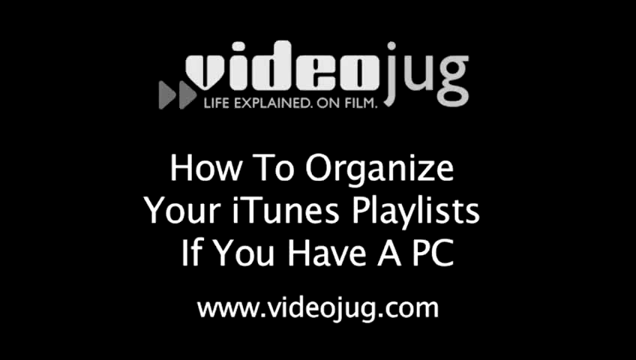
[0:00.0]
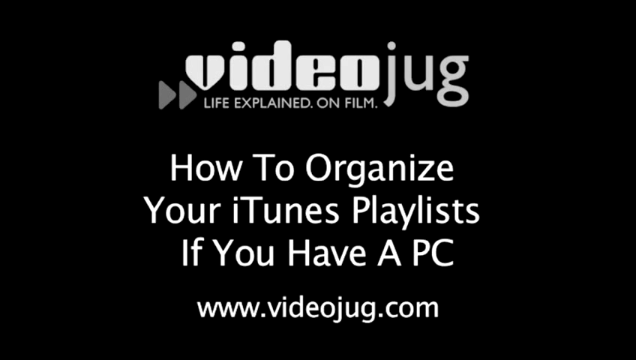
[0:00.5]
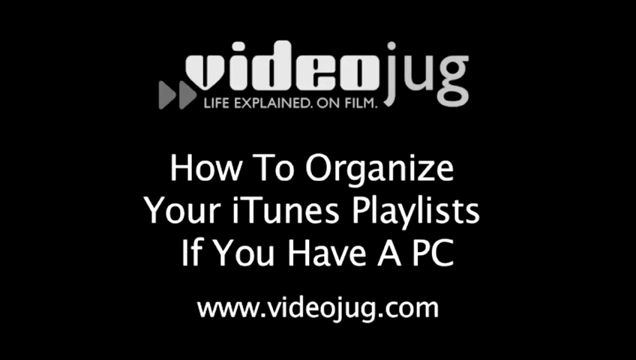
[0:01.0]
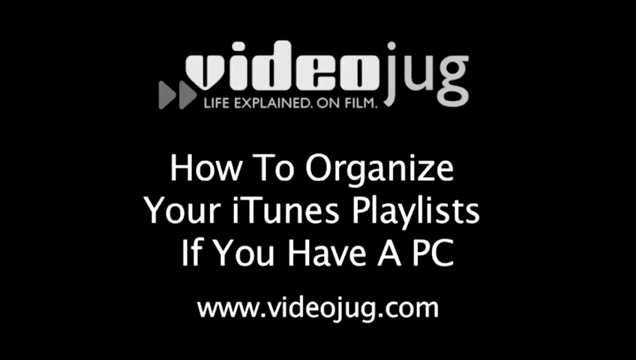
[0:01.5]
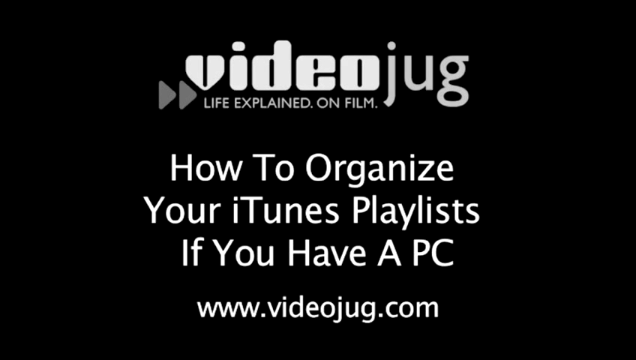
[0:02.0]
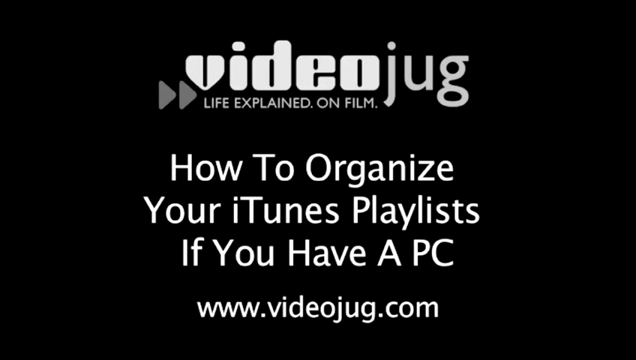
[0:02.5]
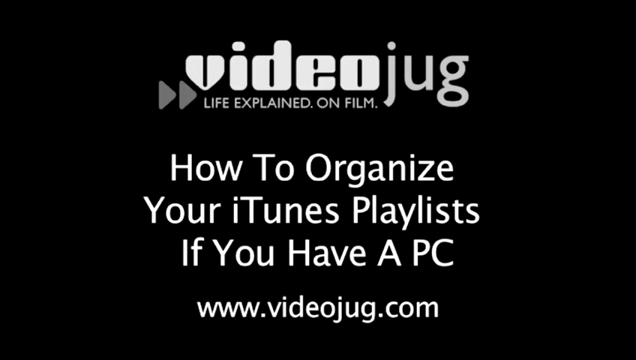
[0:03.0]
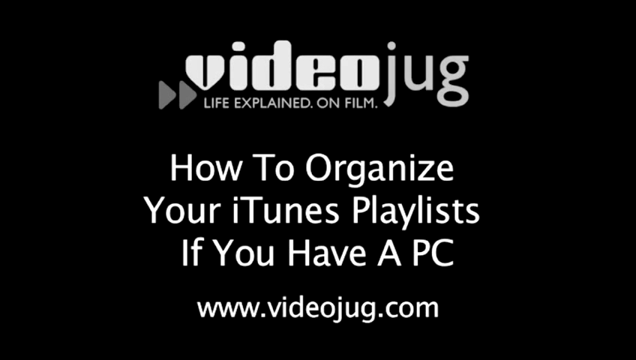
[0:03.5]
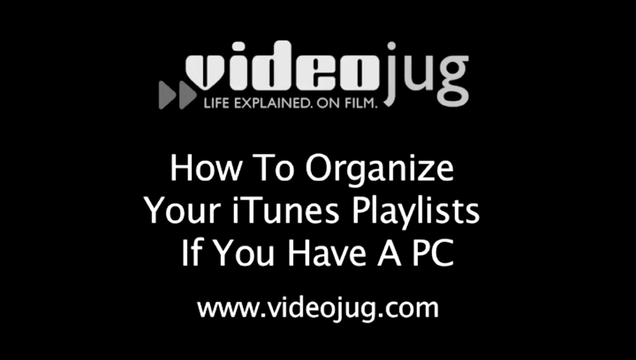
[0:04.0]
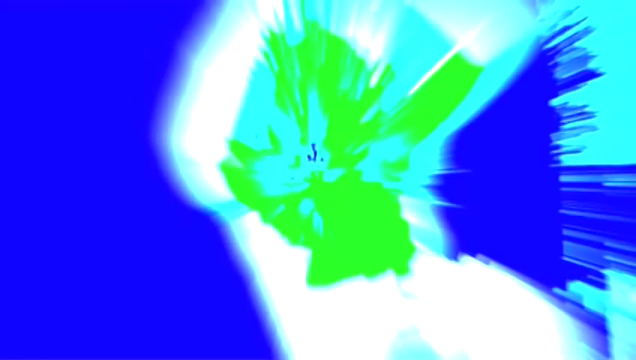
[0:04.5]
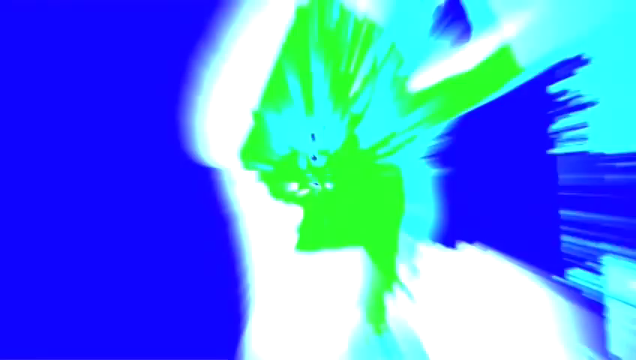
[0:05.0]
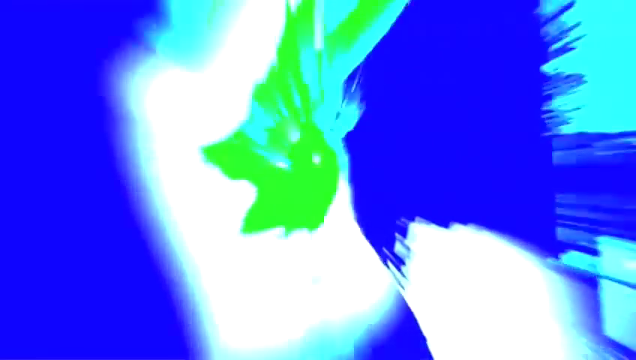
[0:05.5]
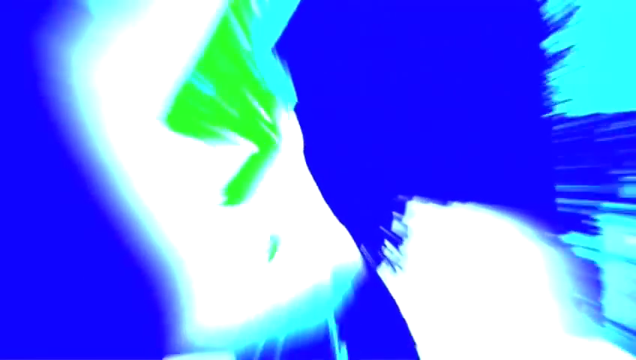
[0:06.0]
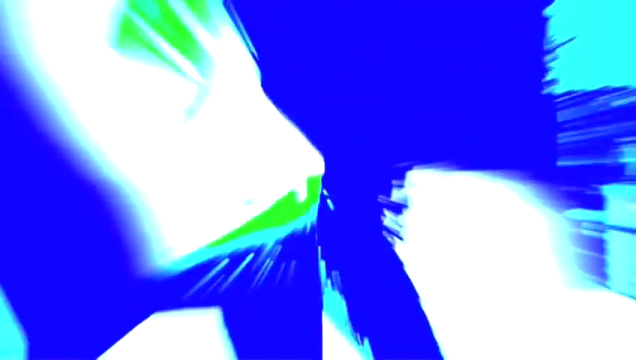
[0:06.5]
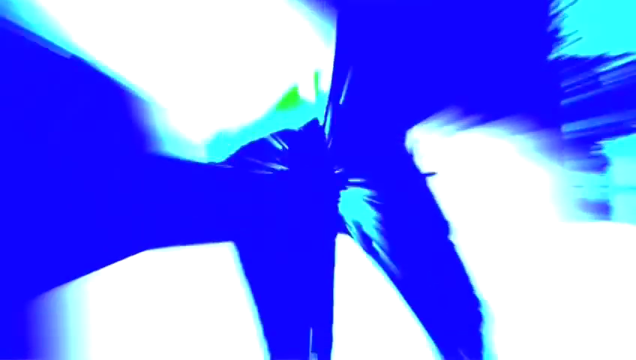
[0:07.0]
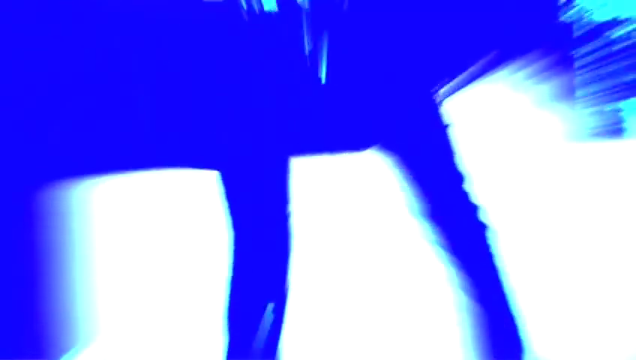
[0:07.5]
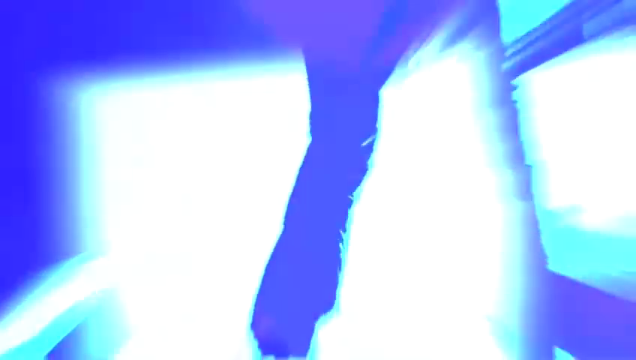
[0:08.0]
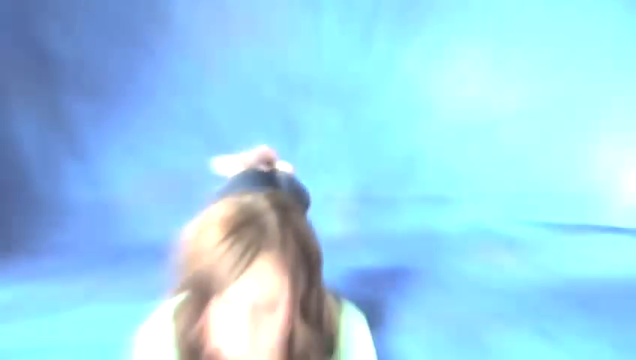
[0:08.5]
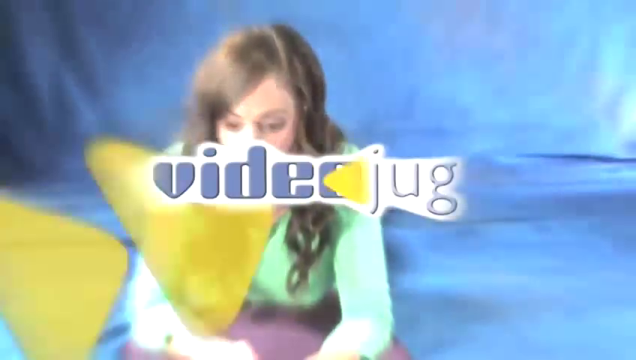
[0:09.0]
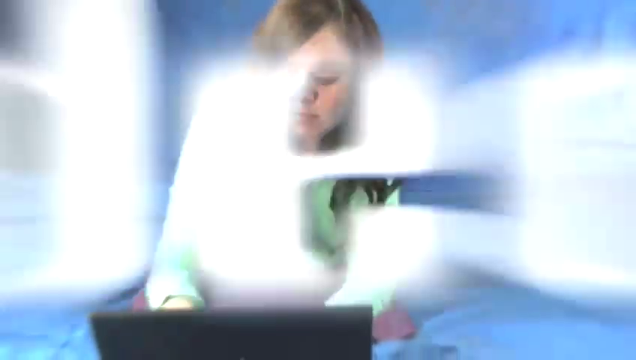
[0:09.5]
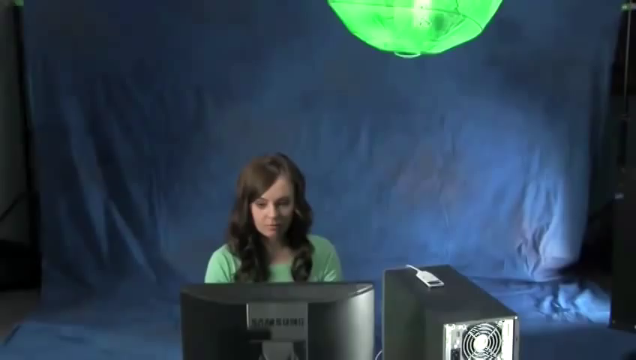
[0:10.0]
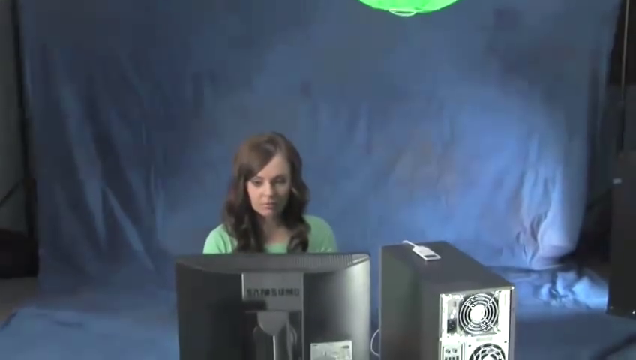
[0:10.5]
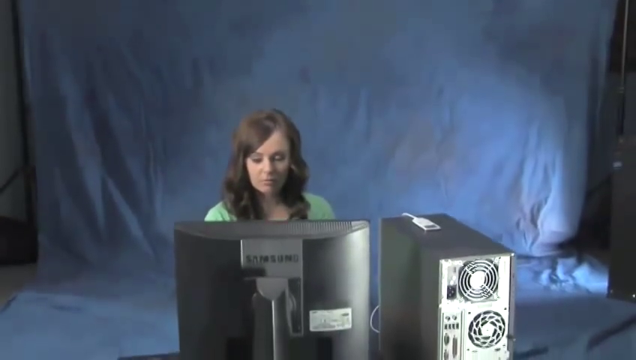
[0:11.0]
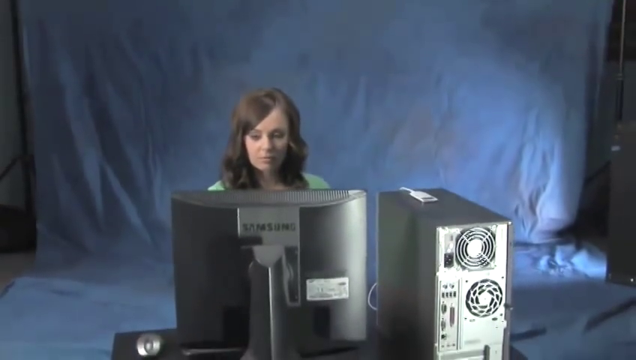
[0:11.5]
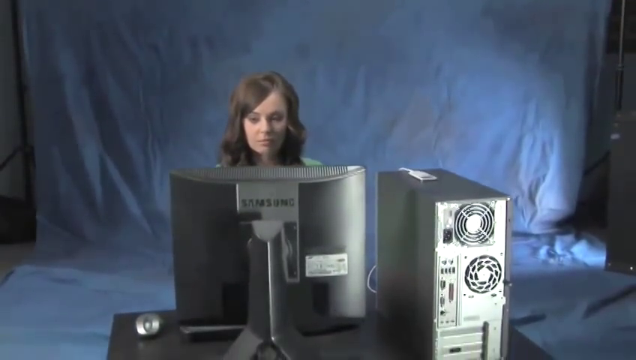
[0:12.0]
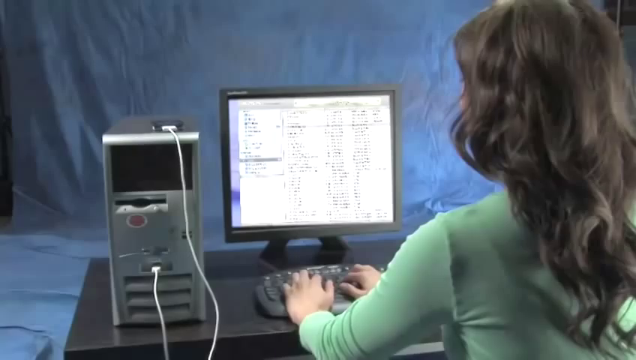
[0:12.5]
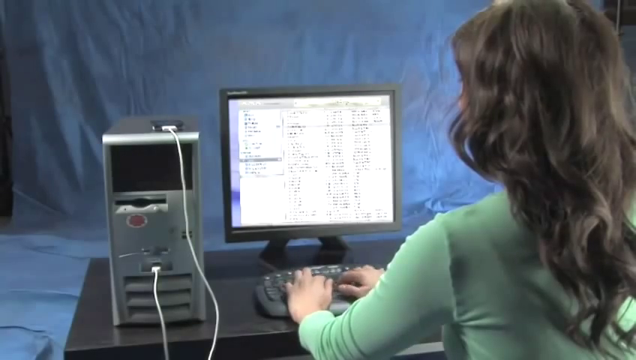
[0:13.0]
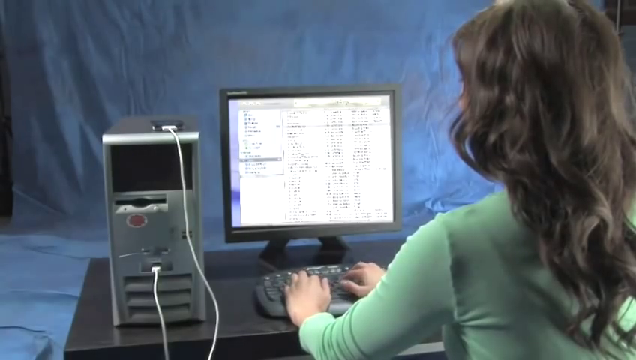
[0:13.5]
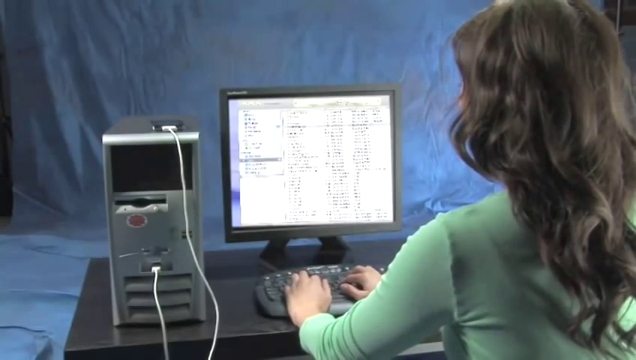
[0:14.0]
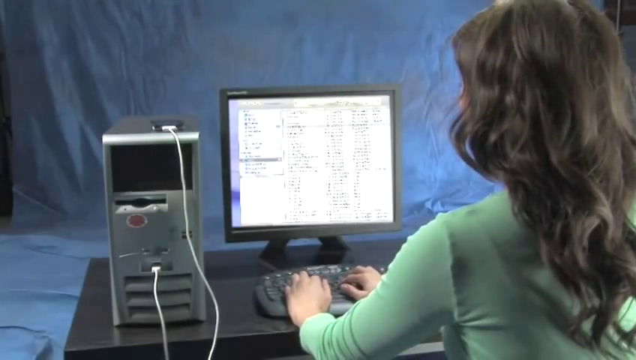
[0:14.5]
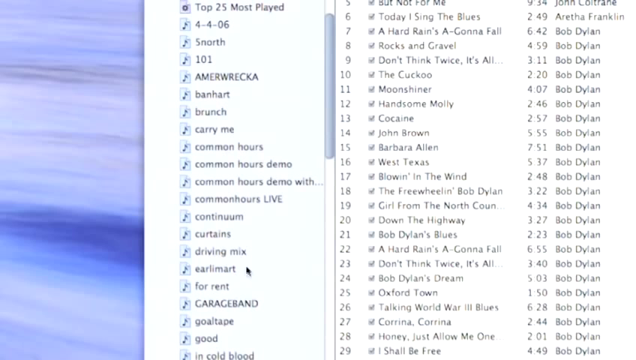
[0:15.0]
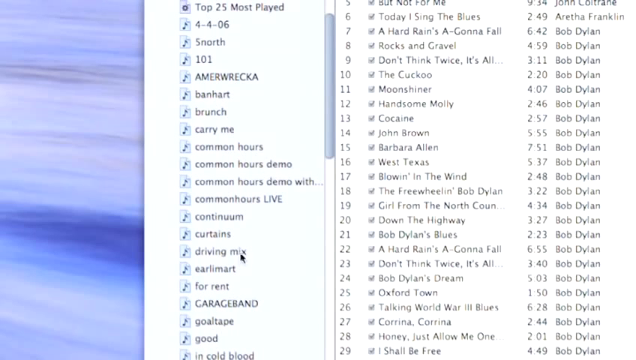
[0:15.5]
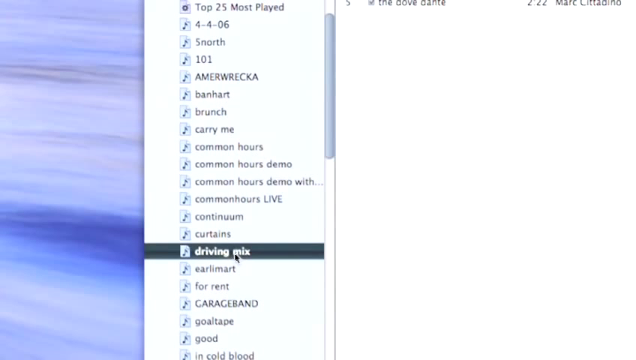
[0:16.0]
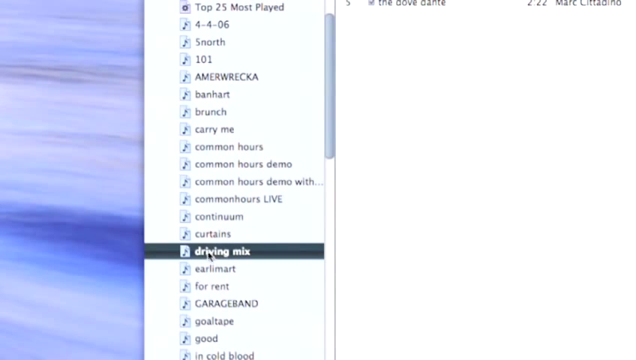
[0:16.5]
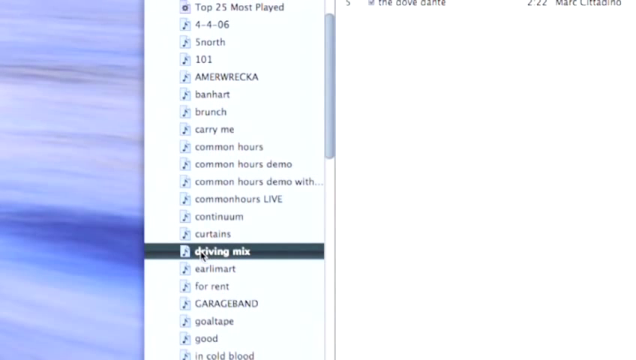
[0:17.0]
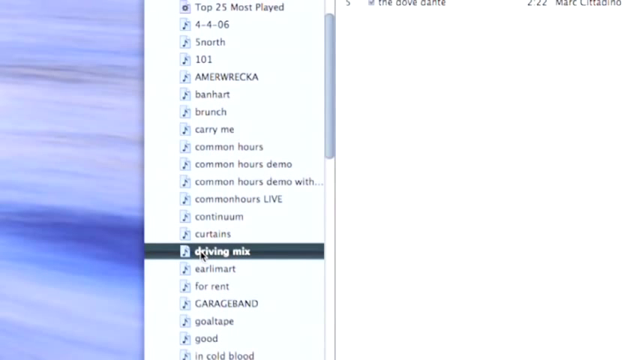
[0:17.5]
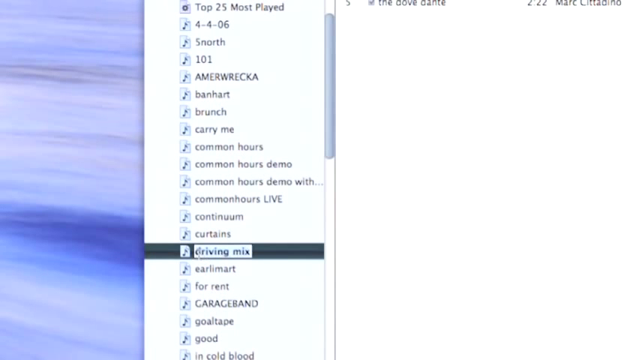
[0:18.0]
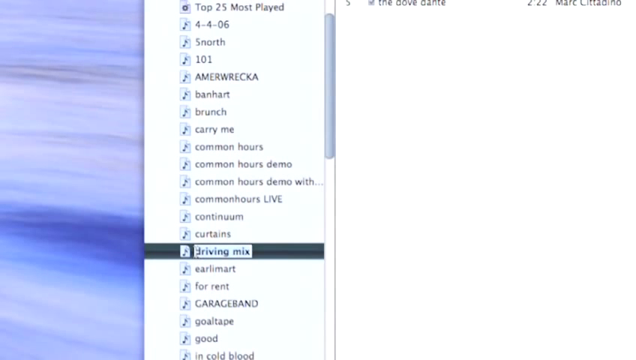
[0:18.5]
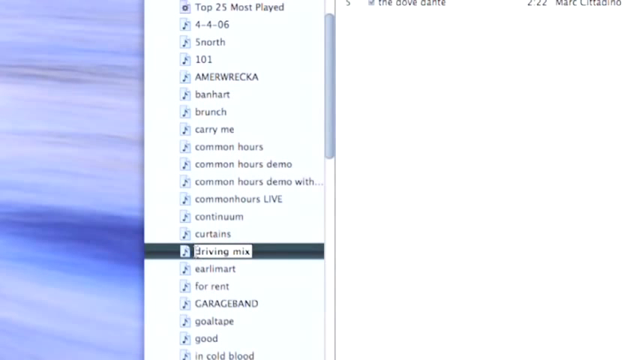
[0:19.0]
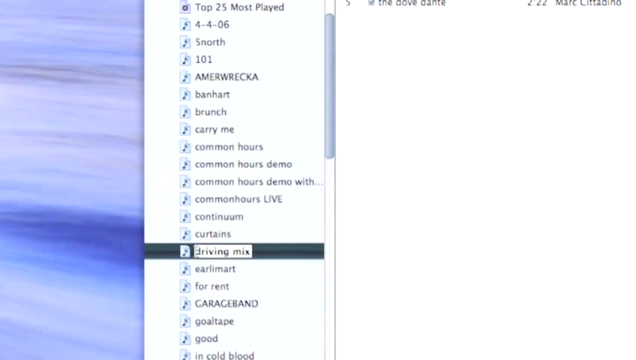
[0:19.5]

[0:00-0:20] The video opens on text against a black background, along with a website link; it concerns how to organise your iTunes playlist if you have a PC. A very vivid image of a girl dancing appears, followed by the Videojug logo with the word "Videojug". The video moves quickly to a girl at a desk typing on a keyboard. She selects from a menu on the computer in front of her, choosing a file whose name appears to include something like "mix".